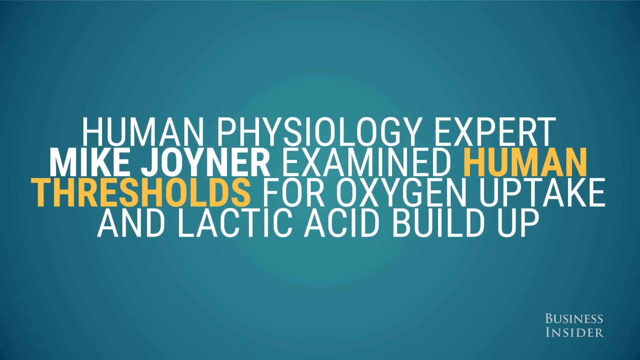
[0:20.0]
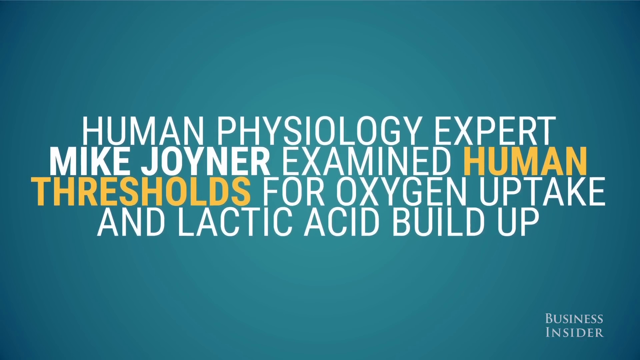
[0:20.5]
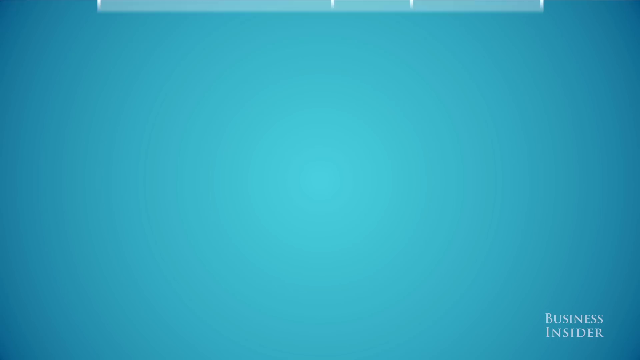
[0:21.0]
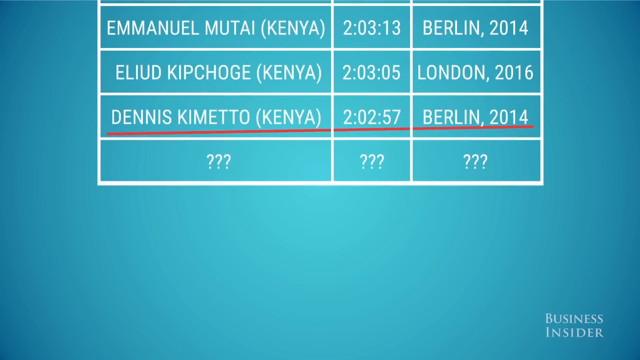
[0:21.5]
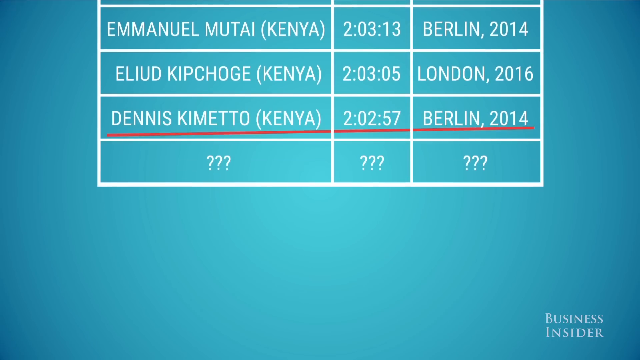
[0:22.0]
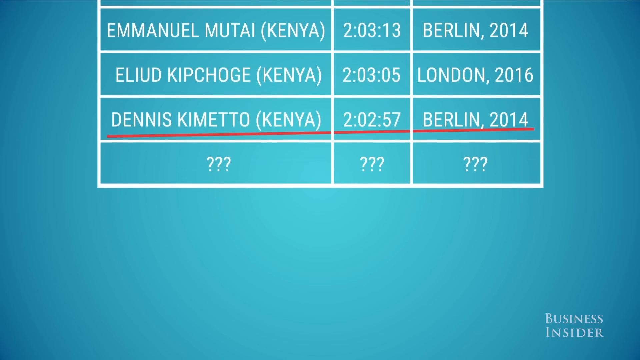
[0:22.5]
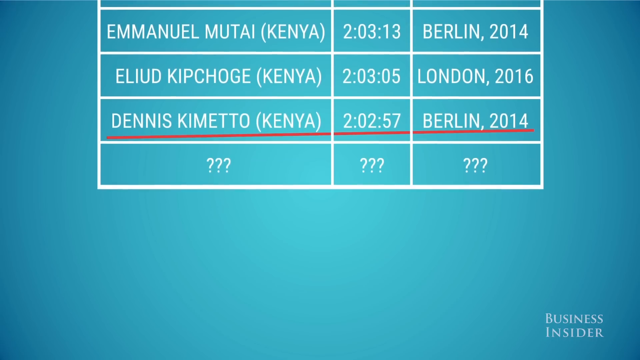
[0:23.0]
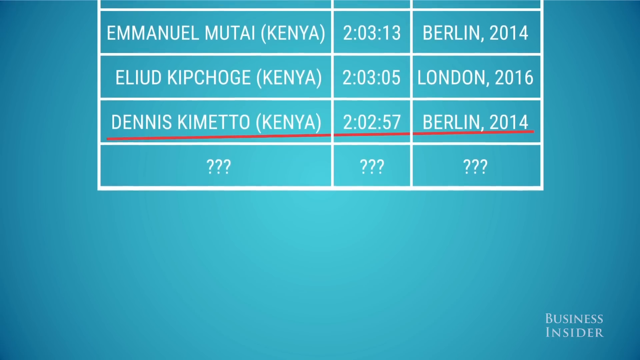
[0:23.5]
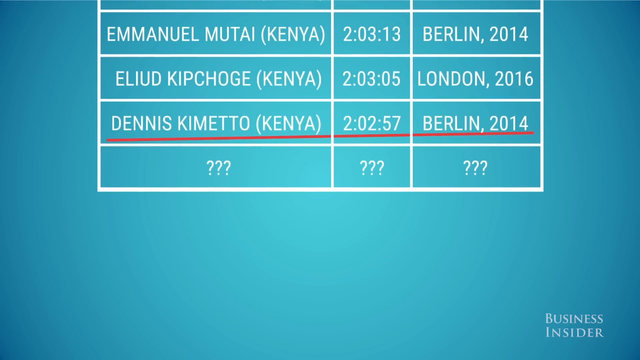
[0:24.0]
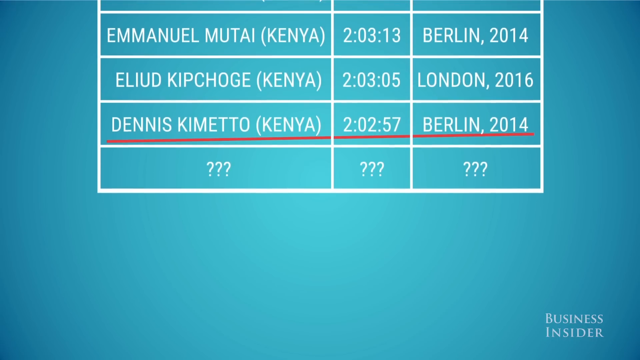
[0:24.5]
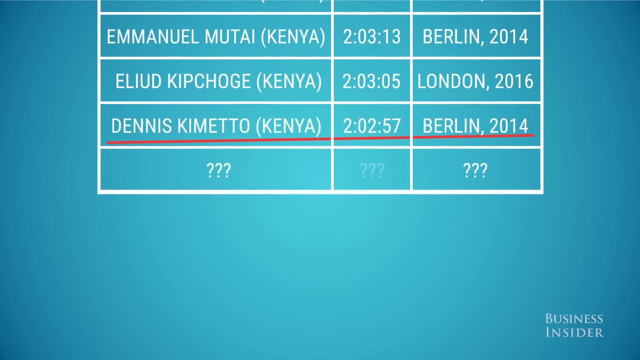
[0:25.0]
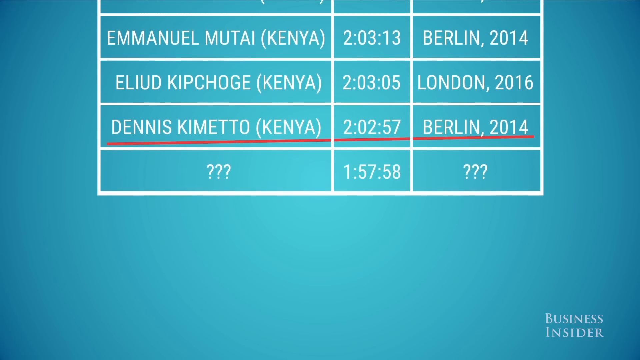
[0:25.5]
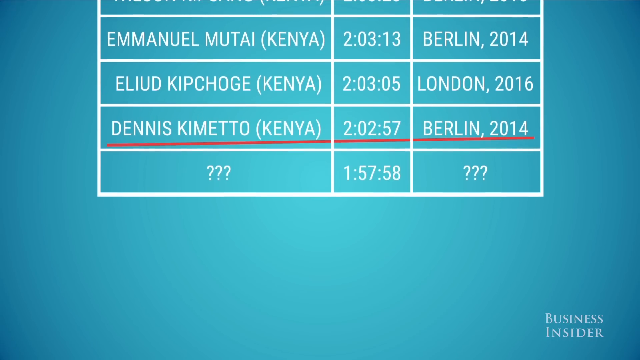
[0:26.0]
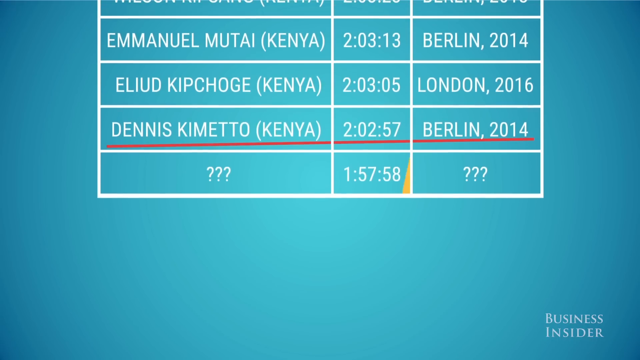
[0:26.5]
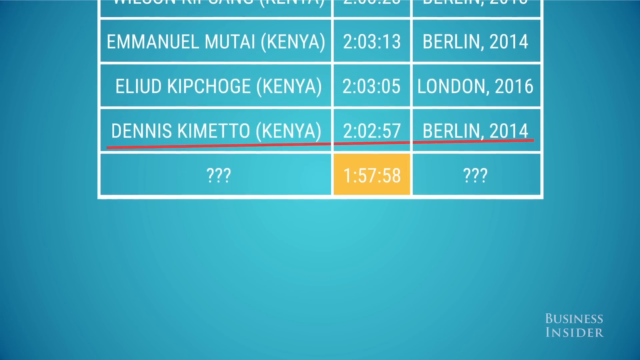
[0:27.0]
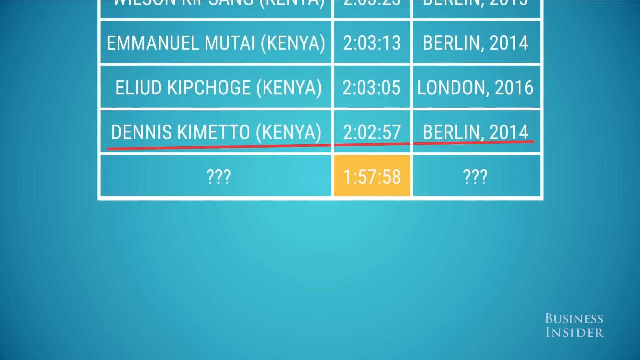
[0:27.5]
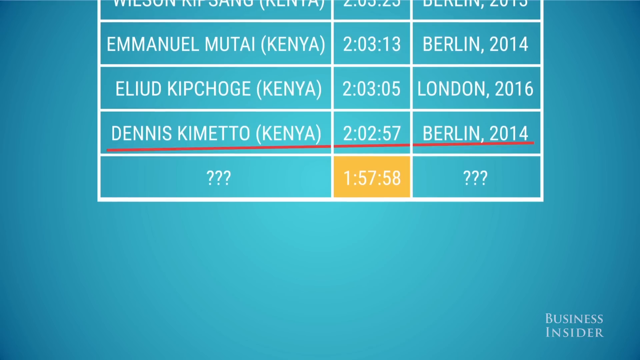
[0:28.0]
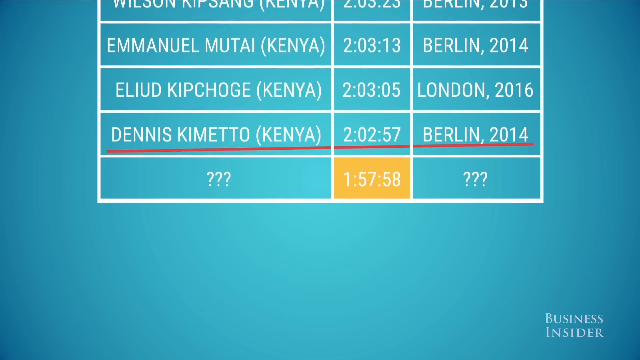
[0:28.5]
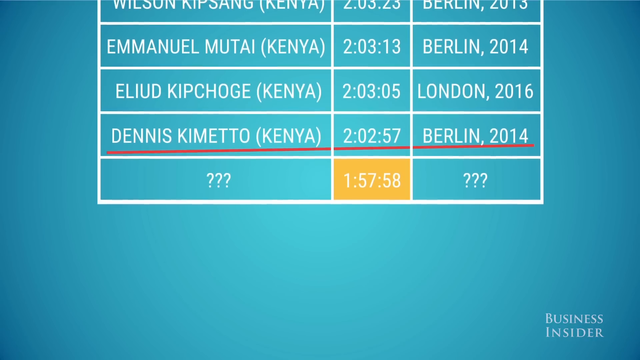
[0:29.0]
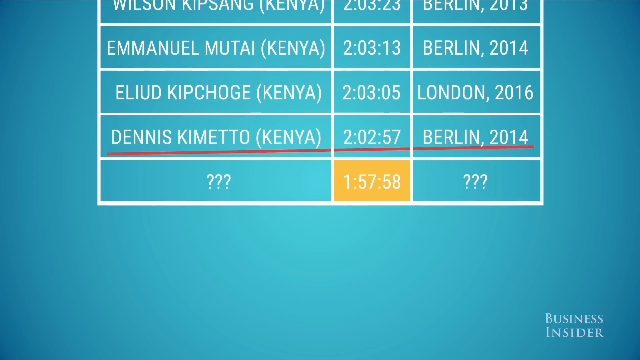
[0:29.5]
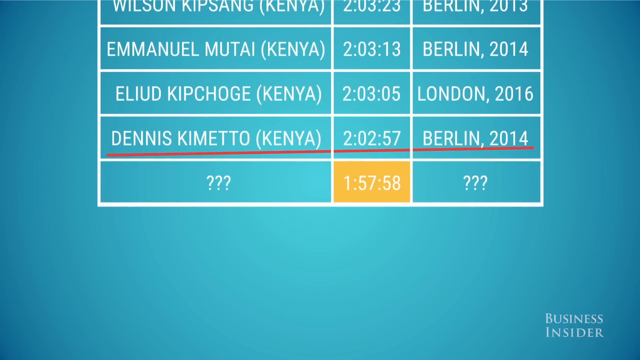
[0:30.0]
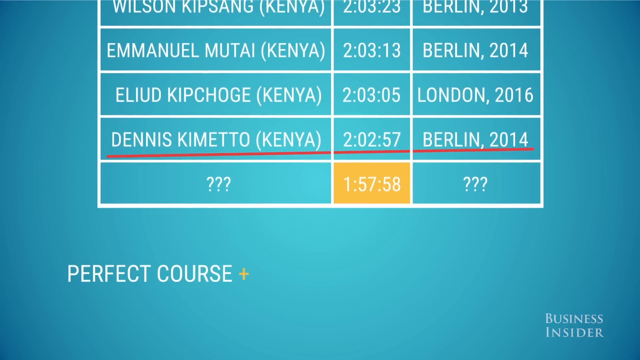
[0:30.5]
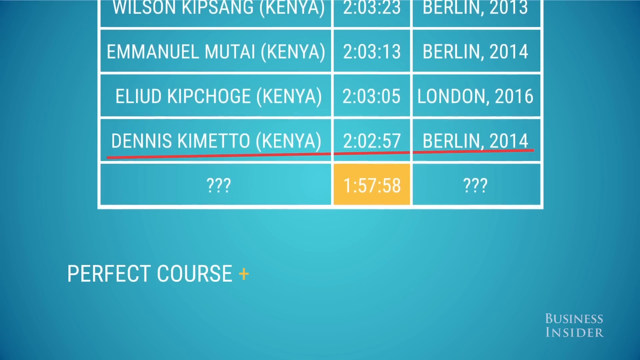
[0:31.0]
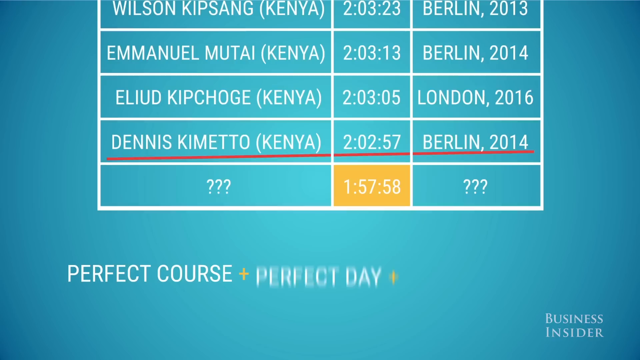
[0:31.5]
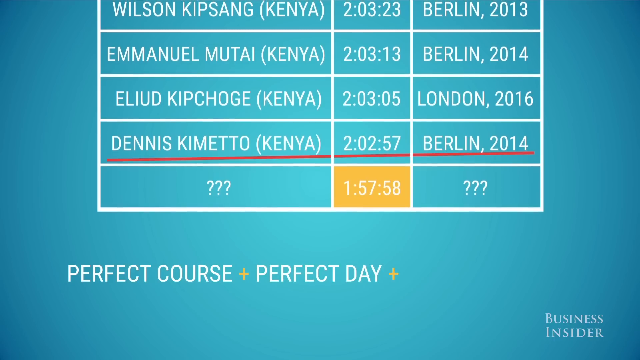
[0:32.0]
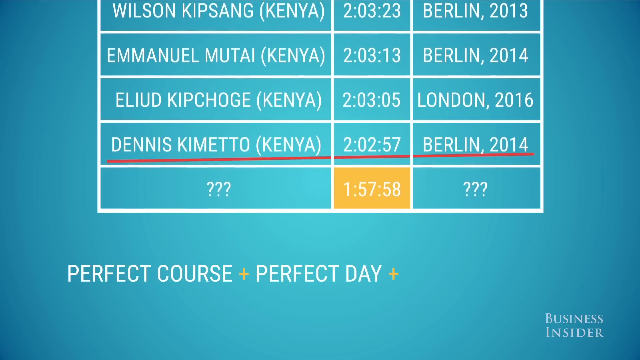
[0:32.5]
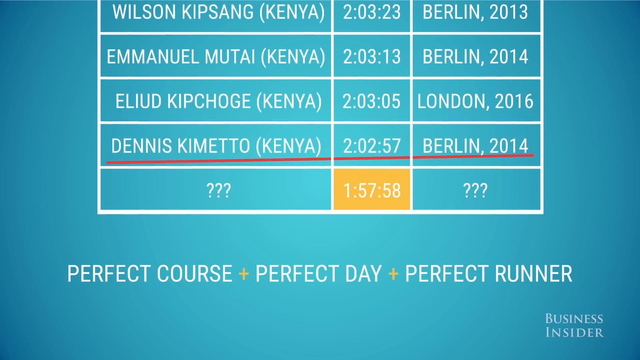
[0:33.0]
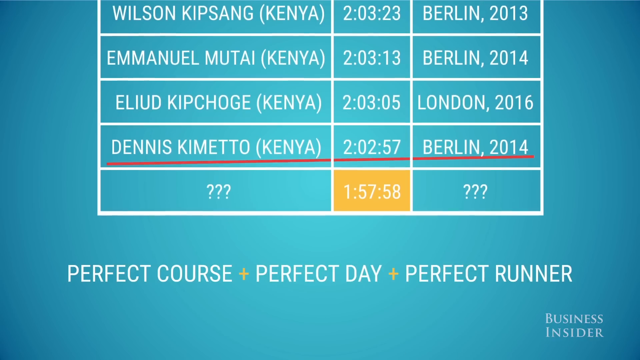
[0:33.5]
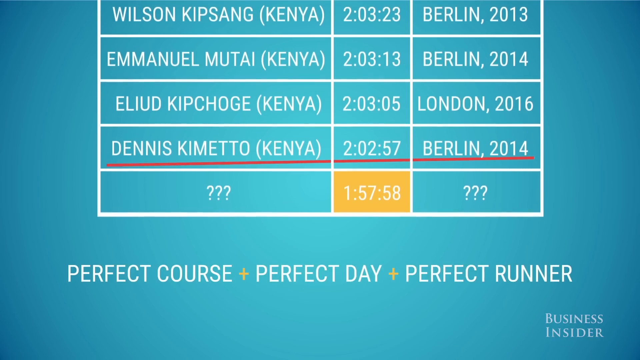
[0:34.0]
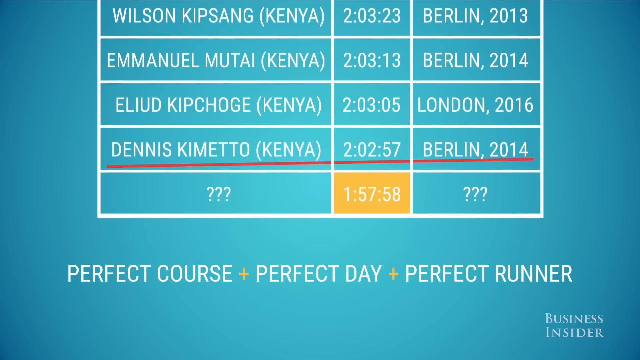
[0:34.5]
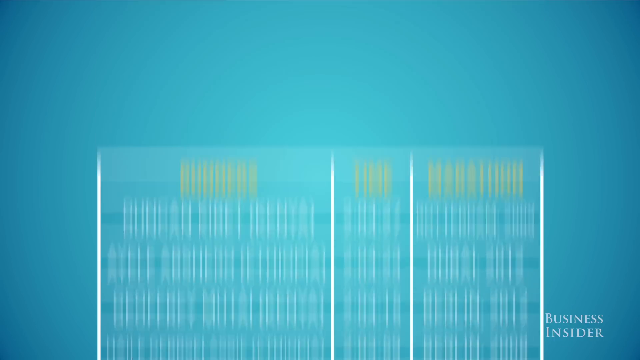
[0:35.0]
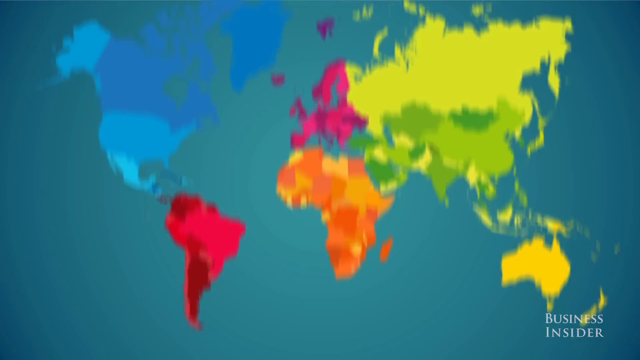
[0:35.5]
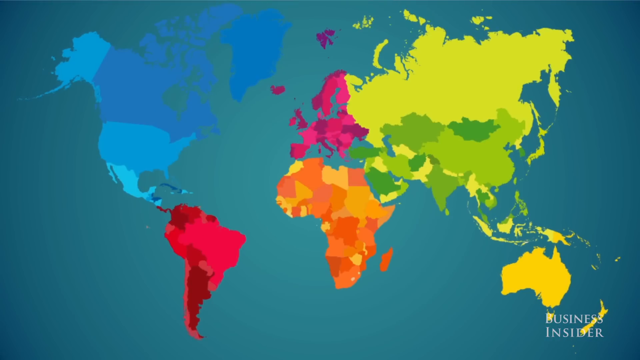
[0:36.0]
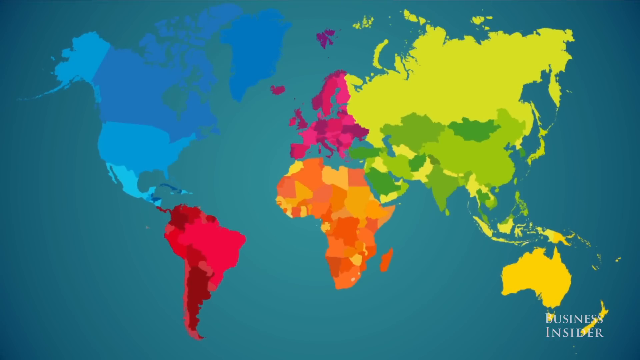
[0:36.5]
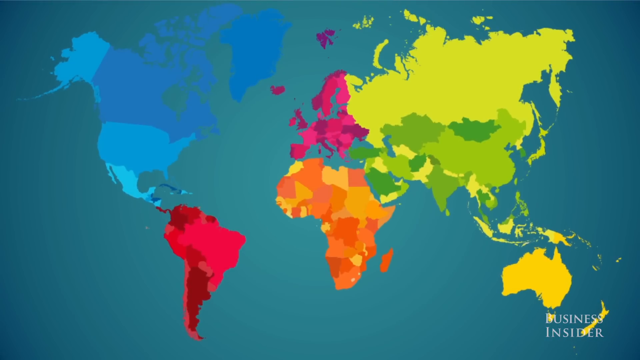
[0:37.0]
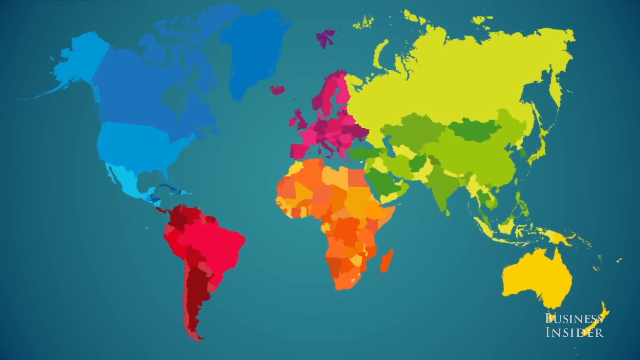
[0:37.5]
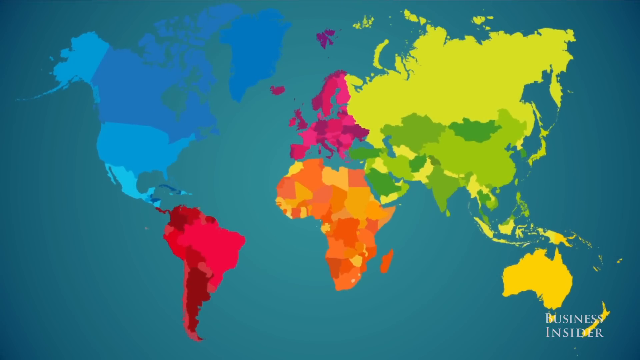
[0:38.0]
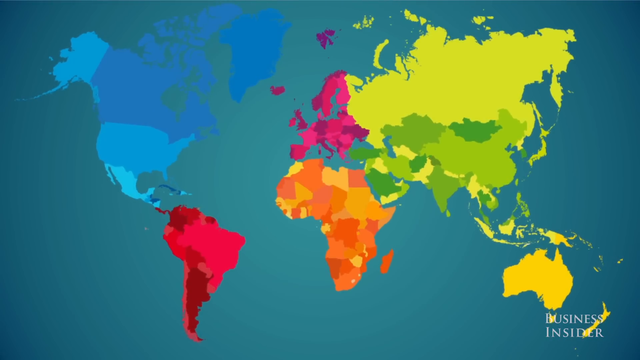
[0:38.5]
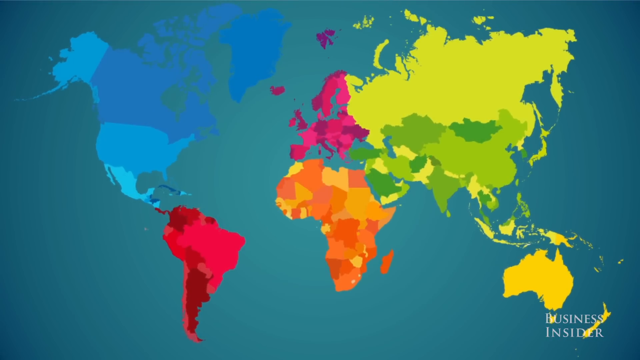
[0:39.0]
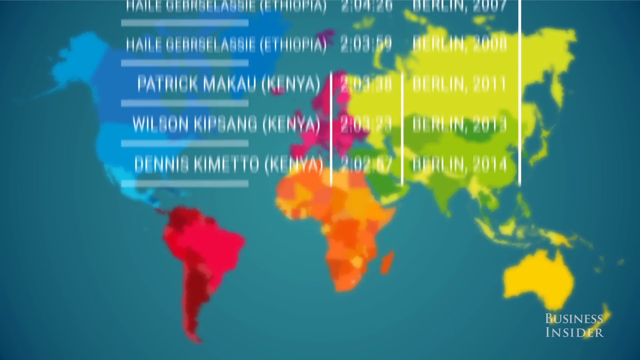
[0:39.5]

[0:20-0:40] On a blue background, text reads "human physiology expert Mike Joyner examine human thresholds for oxygen uptake and lactic acid build up." "Business Insider" appears at the bottom of the screen. Times from different runners are then shown, with question marks at the end of the box. Everyone on the list finished in a little over two hours, and then a time of 1 hour, 57 minutes and 58 seconds appears. Text reads "perfect course, perfect day, plus perfect runner," and a map shows the different continents on Earth in different colors.